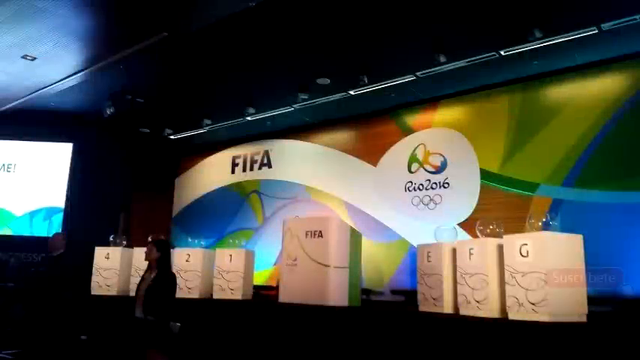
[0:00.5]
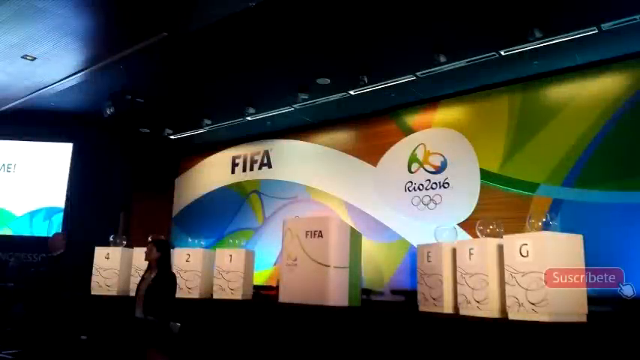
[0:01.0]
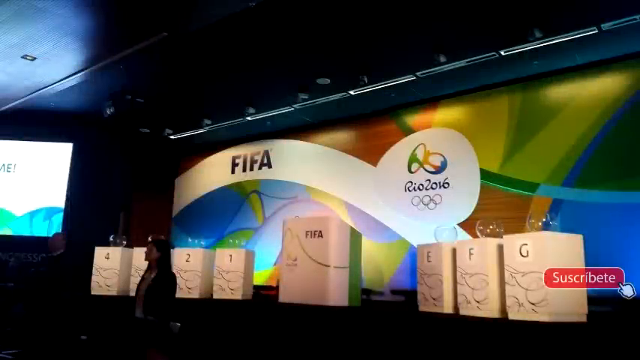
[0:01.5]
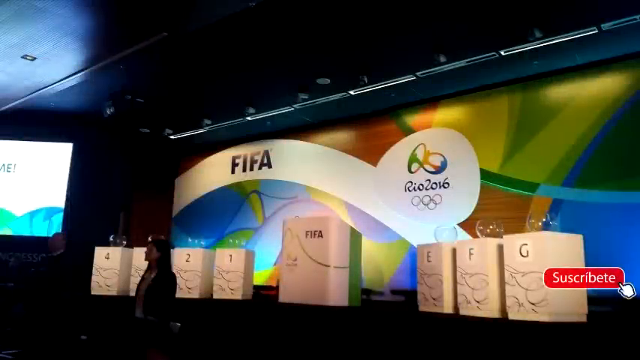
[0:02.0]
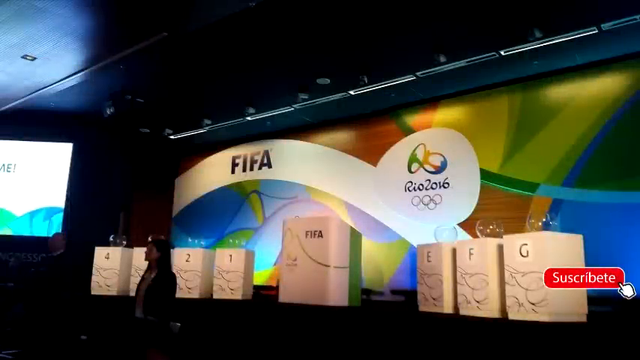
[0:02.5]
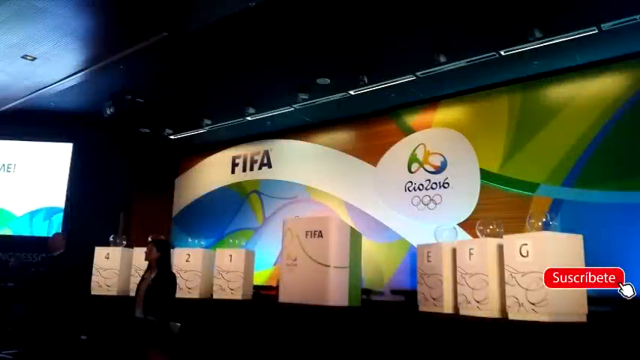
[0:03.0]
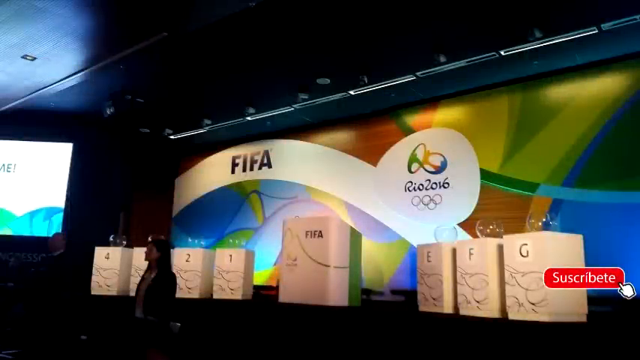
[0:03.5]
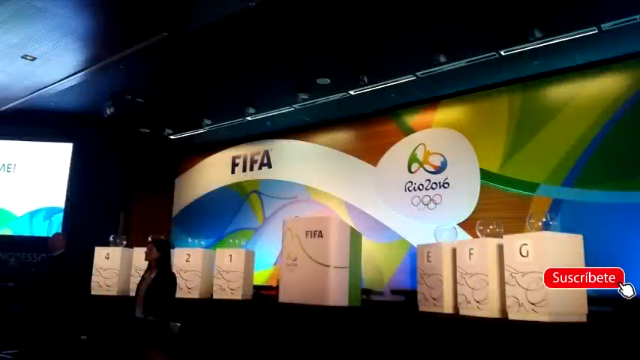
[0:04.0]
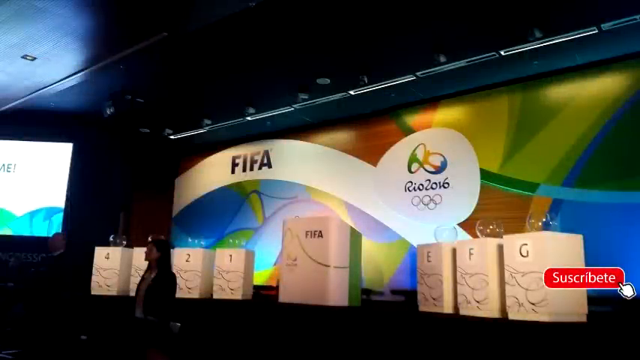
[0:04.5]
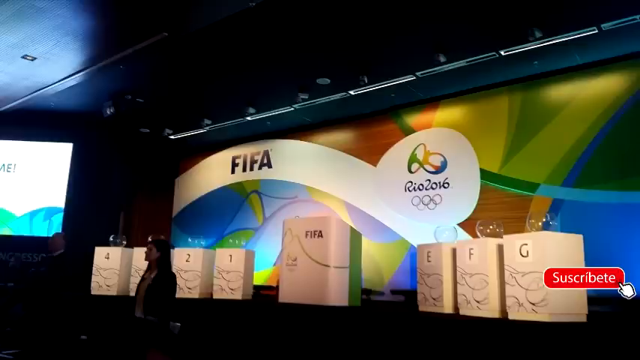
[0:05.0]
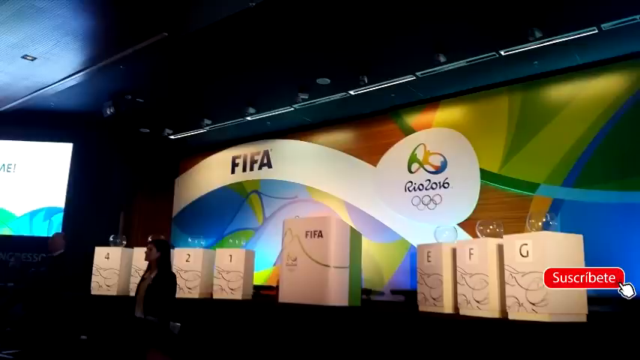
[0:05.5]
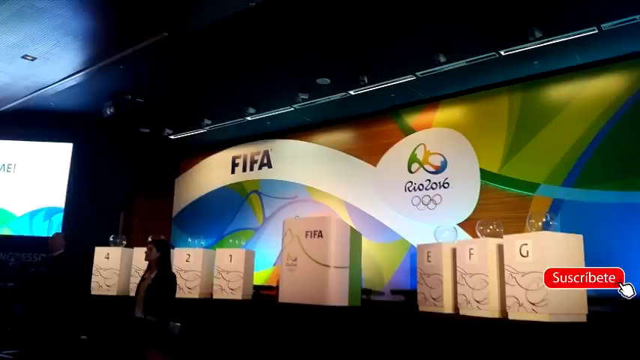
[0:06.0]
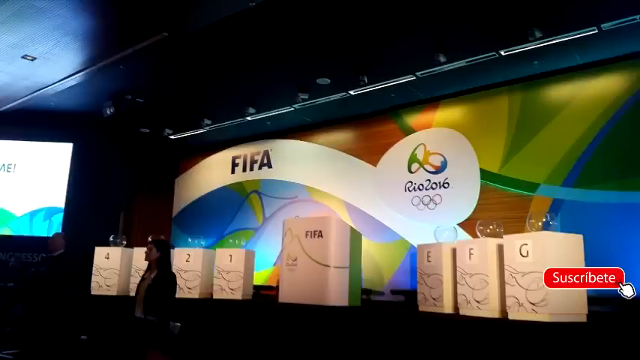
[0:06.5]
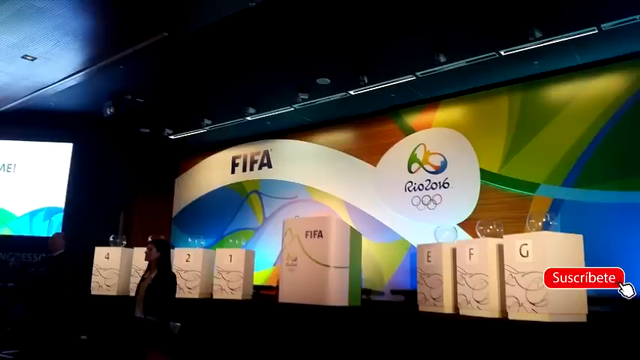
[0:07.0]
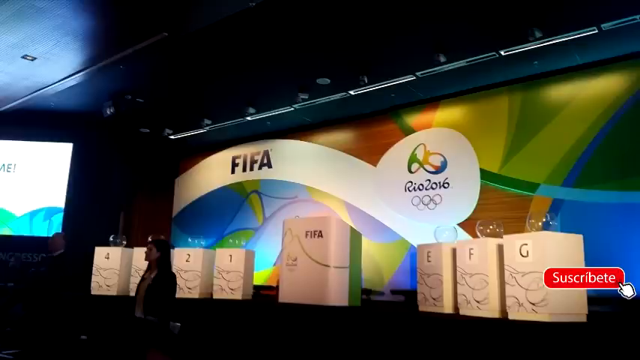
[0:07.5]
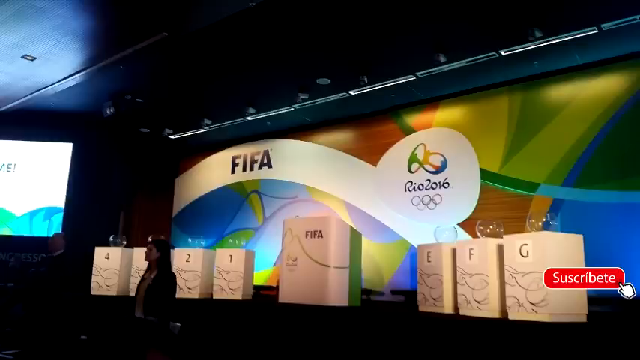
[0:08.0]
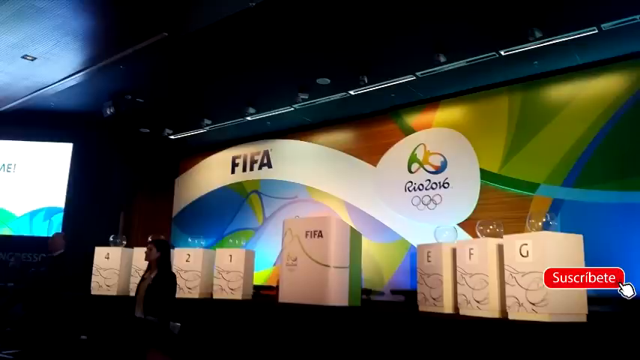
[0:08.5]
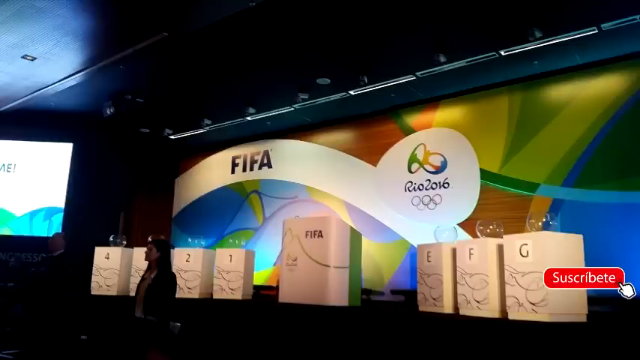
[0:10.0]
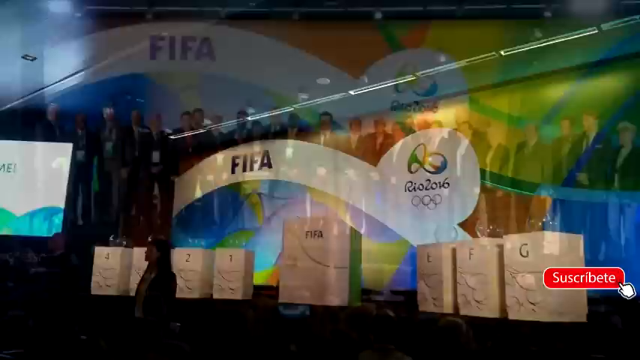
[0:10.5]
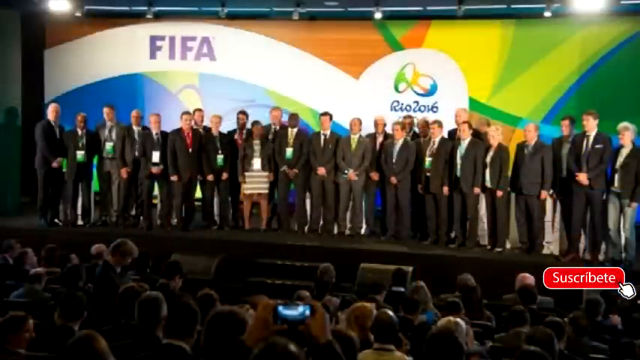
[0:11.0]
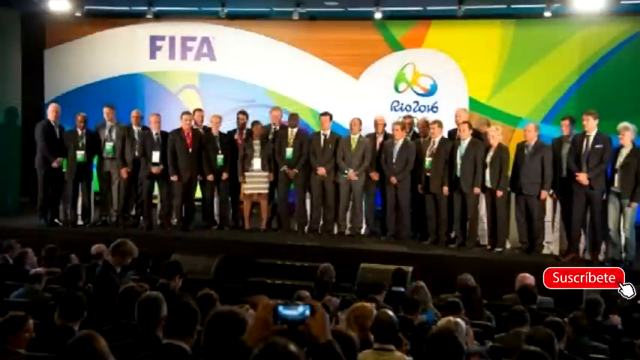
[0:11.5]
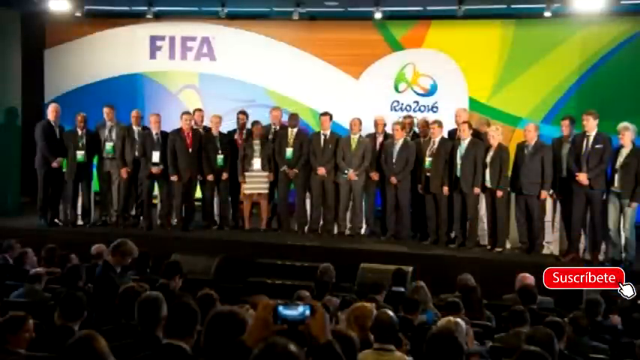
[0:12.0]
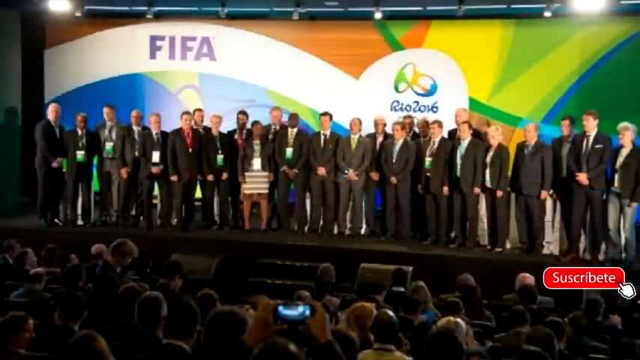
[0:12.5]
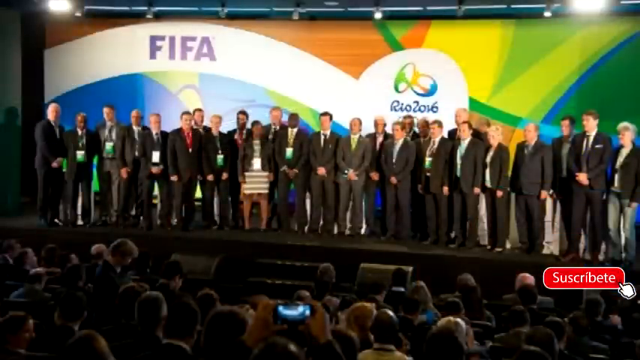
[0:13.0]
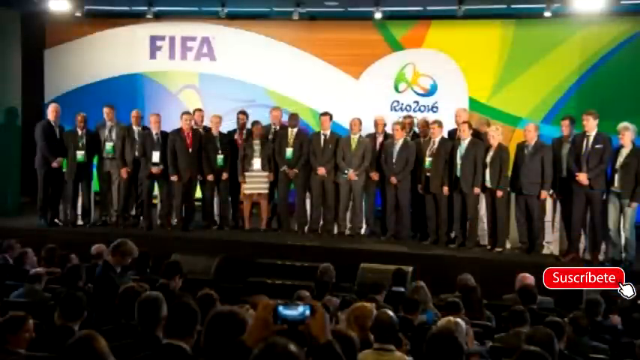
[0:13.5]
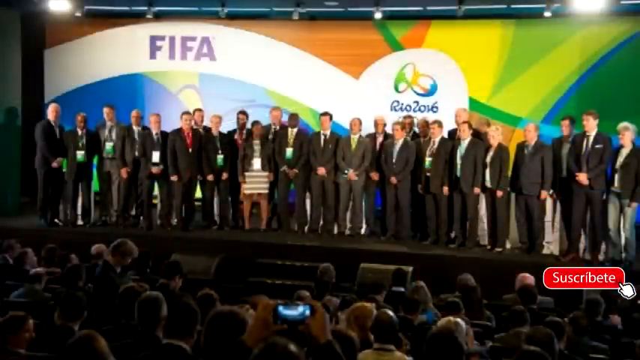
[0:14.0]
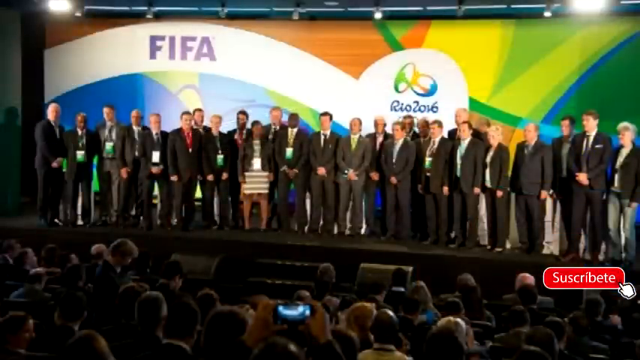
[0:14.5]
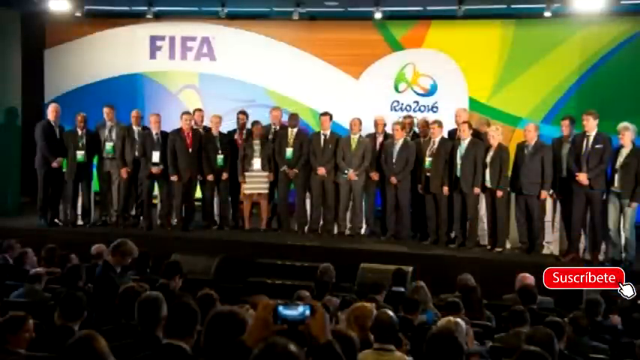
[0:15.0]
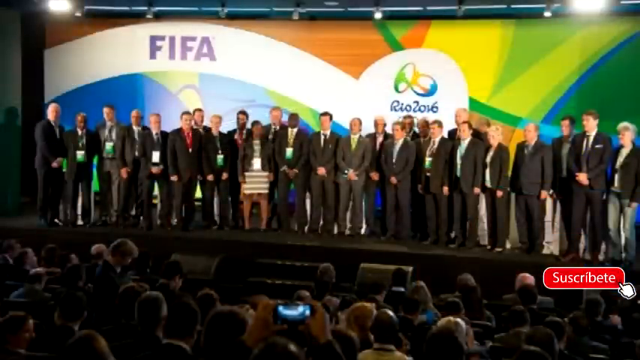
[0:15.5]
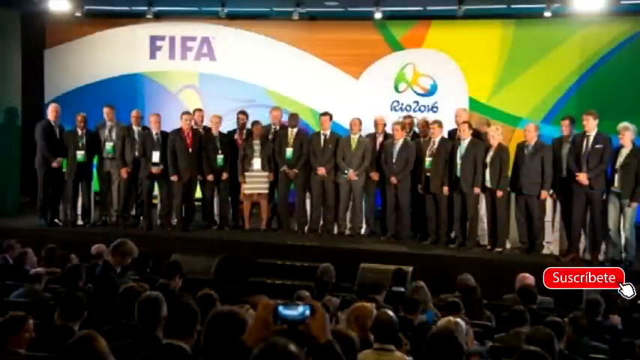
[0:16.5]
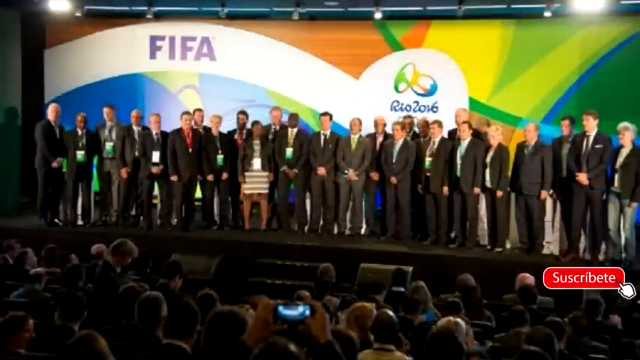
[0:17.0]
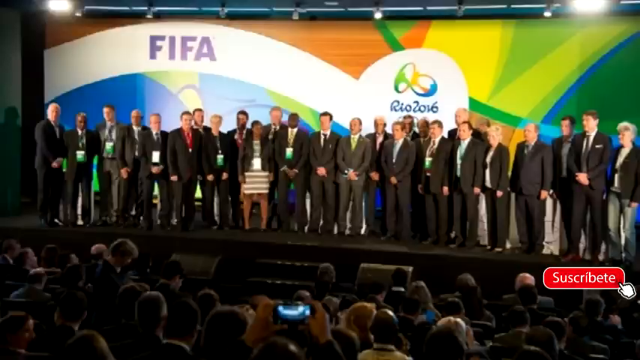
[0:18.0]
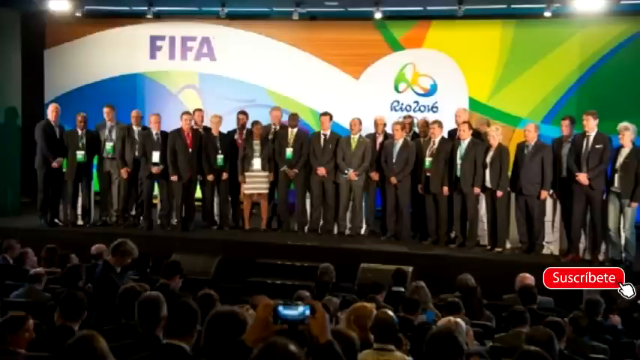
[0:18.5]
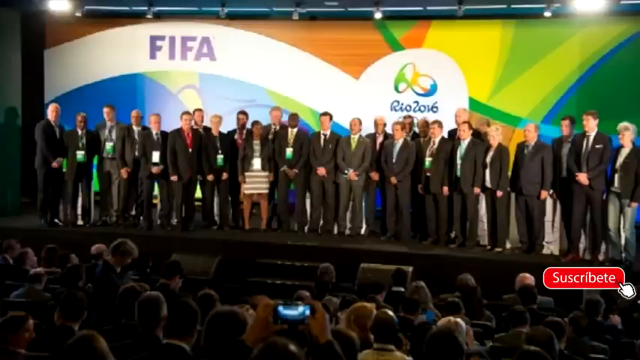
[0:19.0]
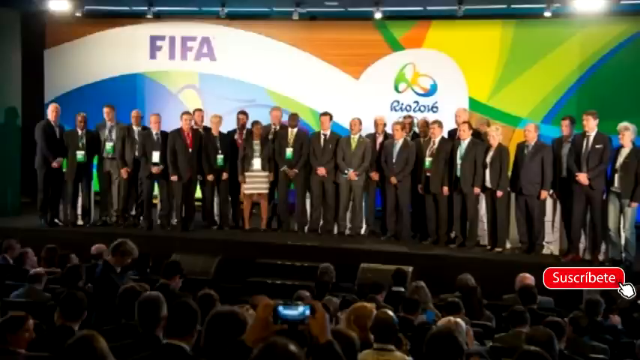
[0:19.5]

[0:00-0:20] The video opens on a black screen, followed by a very colorful "FIFA Rio 2016" image. At the beginning, the countdown "4, 3, 2, 1" appears along with "FIFA EFG", and there is a request to subscribe. There is something like a stage with people standing in front: a man and a woman, and possibly another woman in the far distance. Then a large group of about 30 people is on stage, with an audience as well. The content seems to relate to the Olympics. Rather than moving video, these are still photos, and pictures are being taken of the people standing up front, who are all dressed up. Most of the people are men, many of them in suits; a couple of women also wear suits, there is possibly one person in jeans, and someone wears a dress.